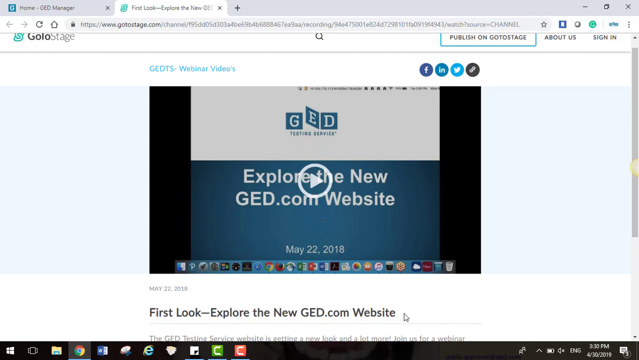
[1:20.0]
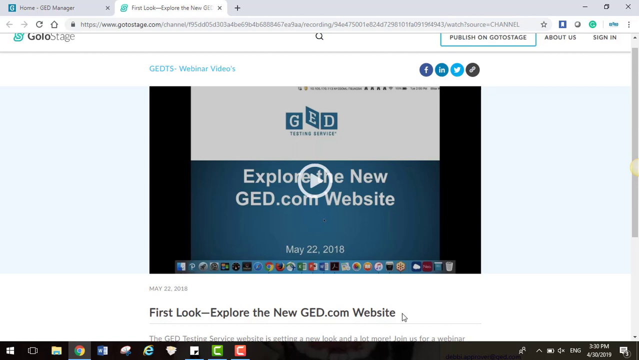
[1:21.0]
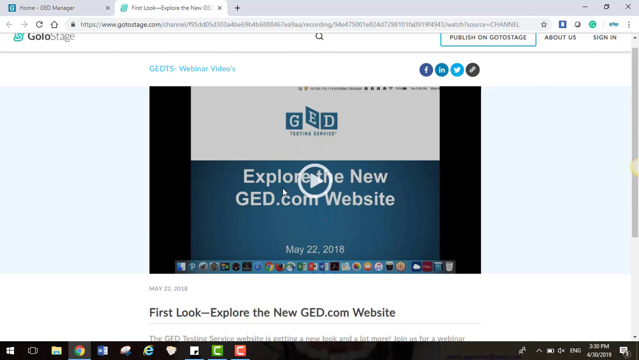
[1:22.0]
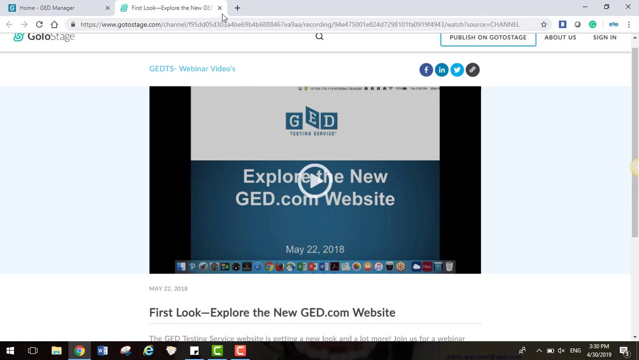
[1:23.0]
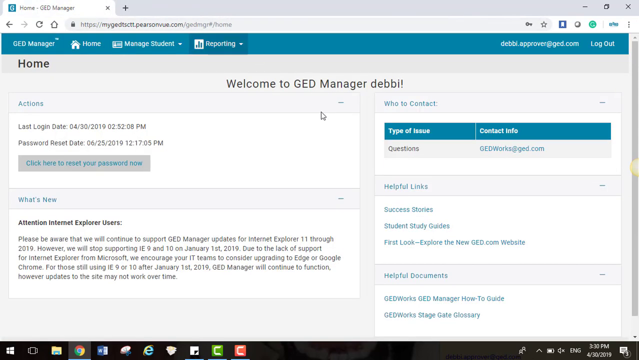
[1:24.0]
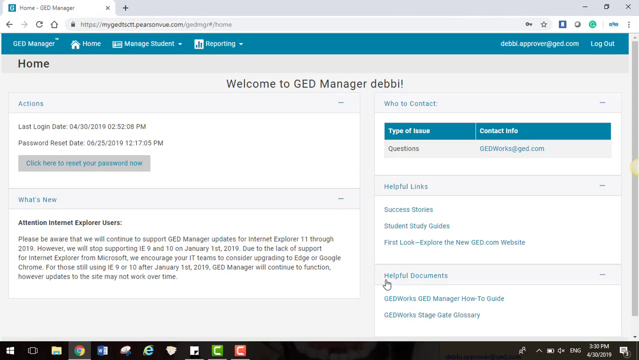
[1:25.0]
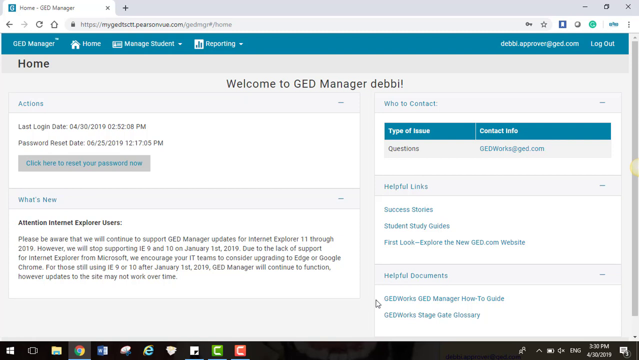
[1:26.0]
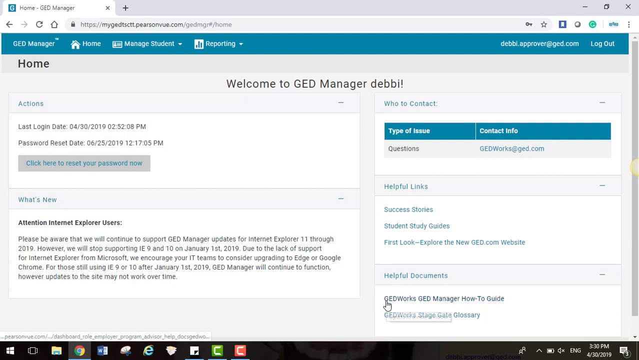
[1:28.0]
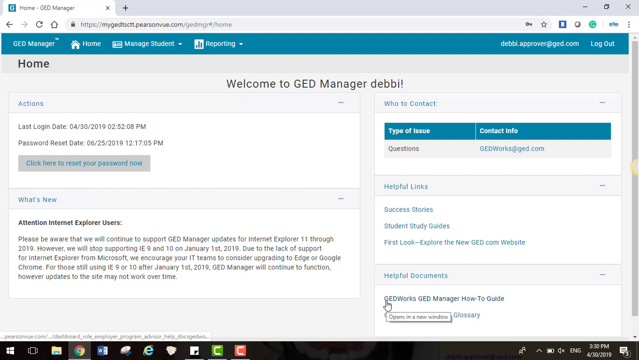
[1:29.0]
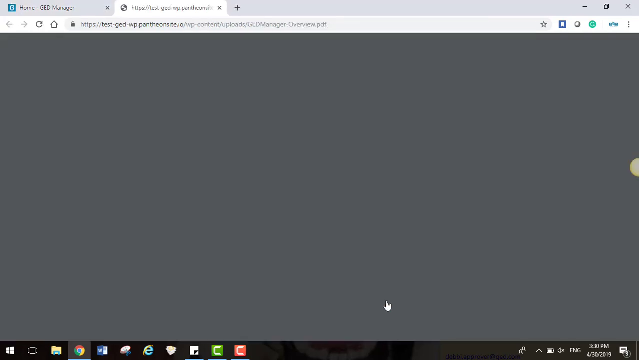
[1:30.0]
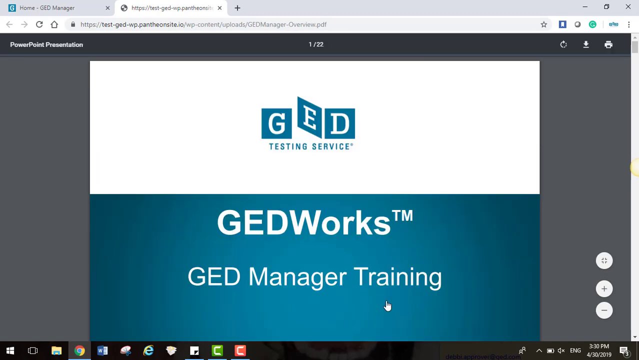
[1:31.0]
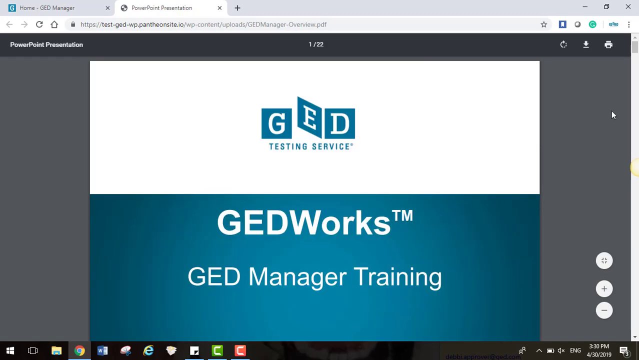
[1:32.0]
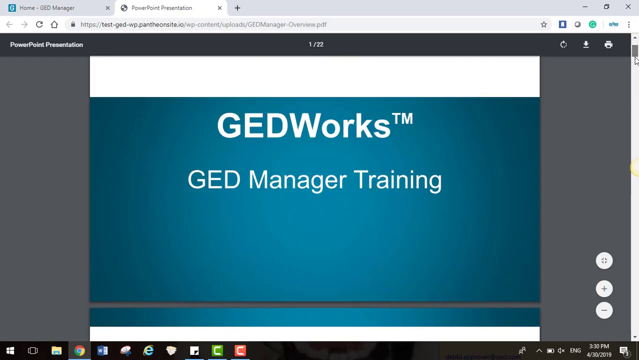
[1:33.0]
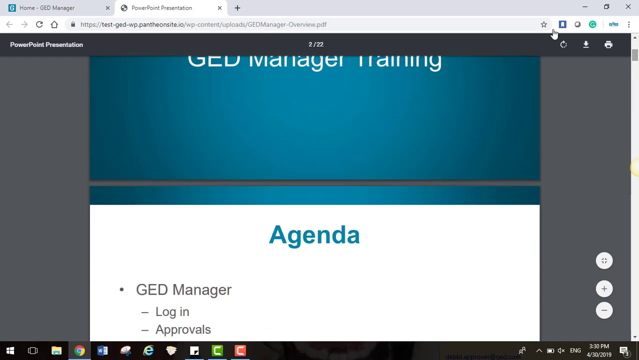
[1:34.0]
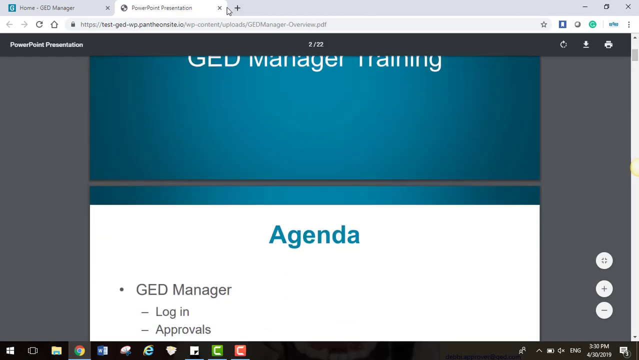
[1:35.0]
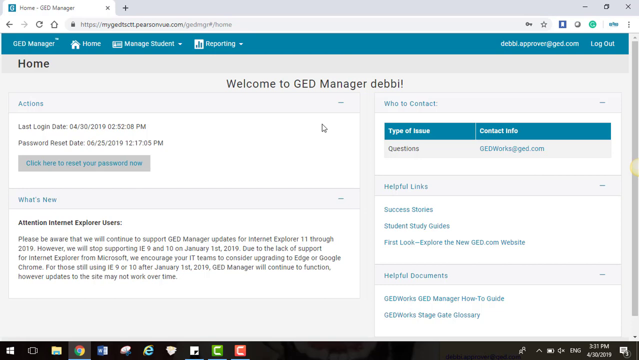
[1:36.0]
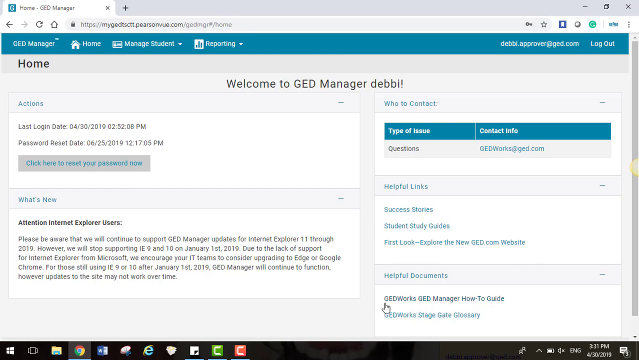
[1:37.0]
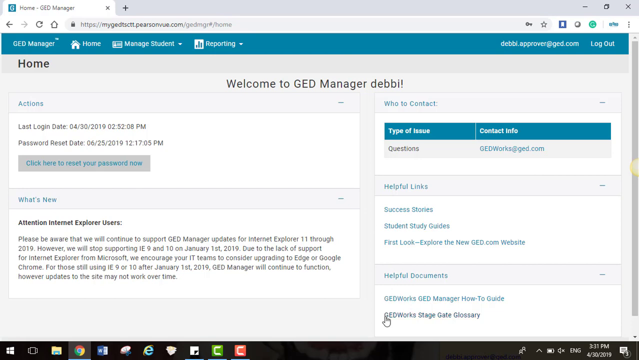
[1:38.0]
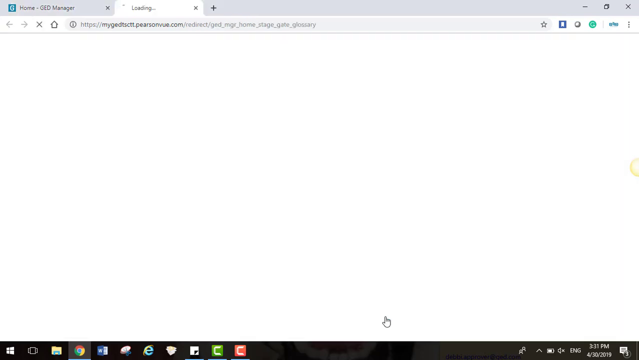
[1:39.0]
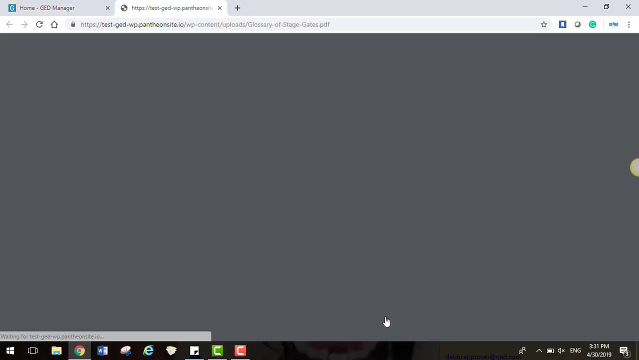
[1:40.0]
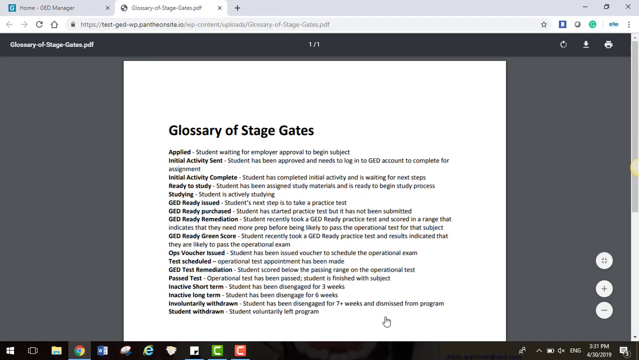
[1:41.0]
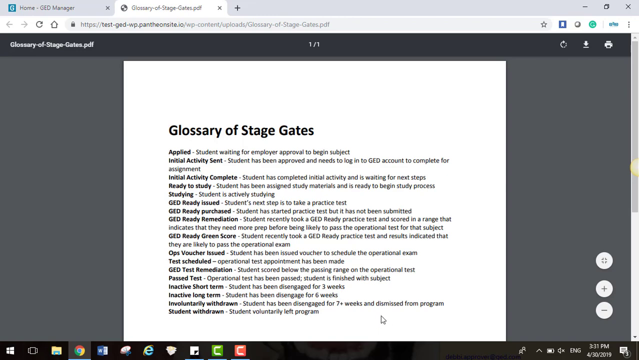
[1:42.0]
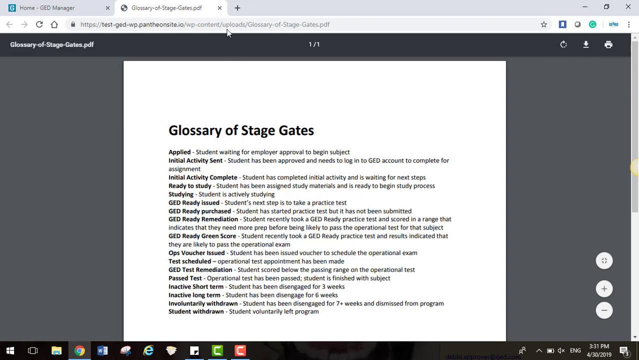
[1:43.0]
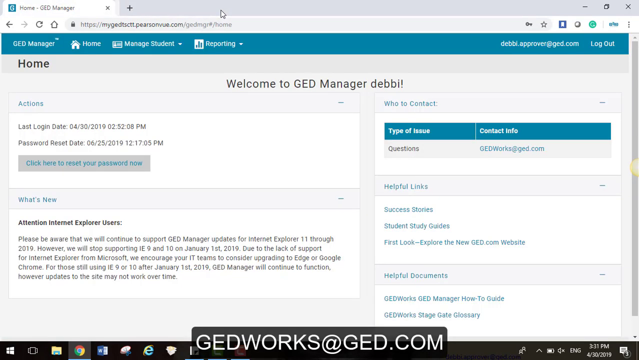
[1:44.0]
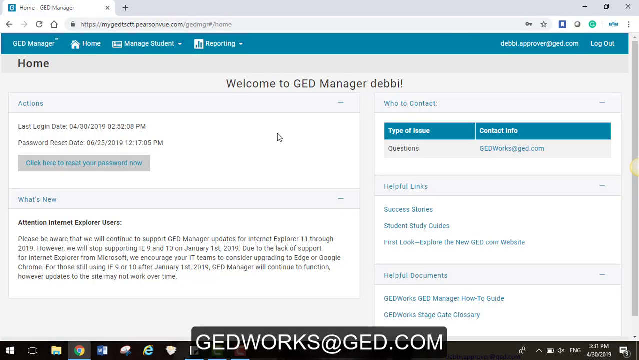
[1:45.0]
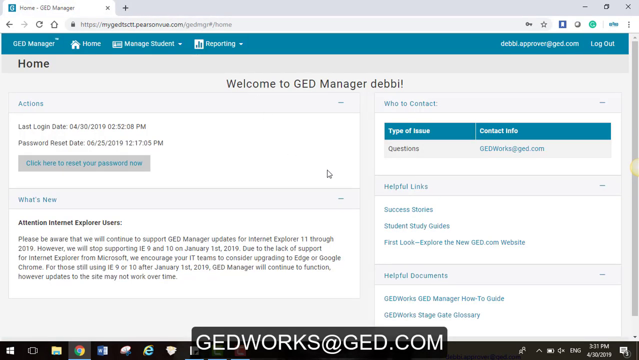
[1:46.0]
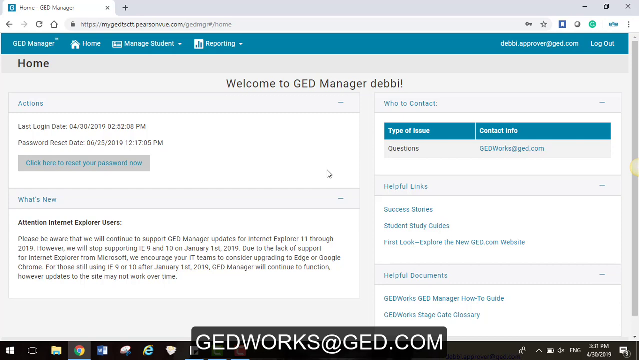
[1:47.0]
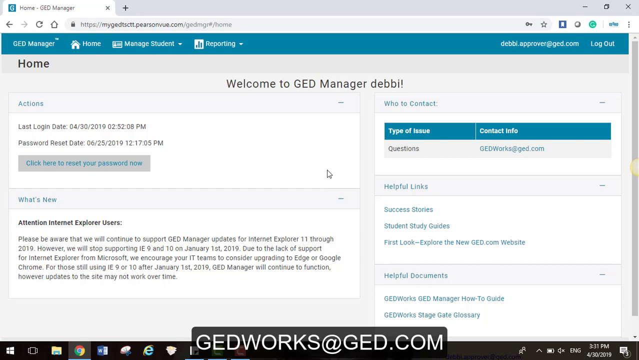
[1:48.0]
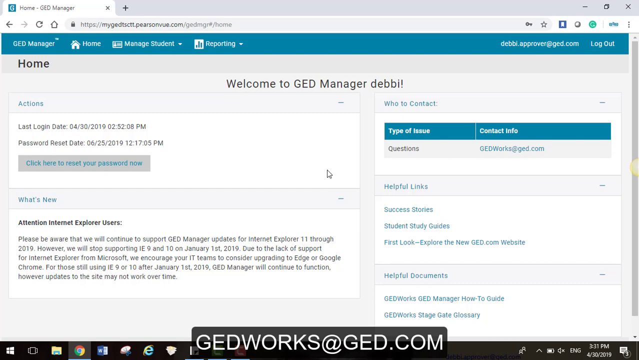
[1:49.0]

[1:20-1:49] A screen recording shows an internet browser with two active tabs, the second one currently in view. This tab is for a website called www.gotostage.com, with an embedded video and below it an article title that says "First look, explore the new ged.com website." The user moves the cursor up to the top of the browser and clicks the X on the second tab to close it, leaving a single tab with the GED Manager homepage. The cursor moves to the right side of the page, to a section towards the bottom called Helpful Documents, and the user selects the first link in the list, GED Works GED Manager How-To Guide. This opens a new tab with a 22-page PDF document. The user scrolls down very briefly with the right side scroll bar, then moves the cursor up and clicks the X on the second tab to close it. Back on the home page, the user clicks the second option under the helpful documents section on the right side, which opens another tab with a one-page PDF document called Glossary of Stage Gates. The user goes up to the tab and clicks the small x to close it, leaving a single tab with the GED manager home page.